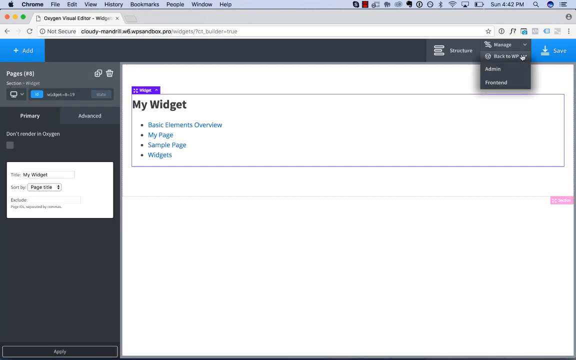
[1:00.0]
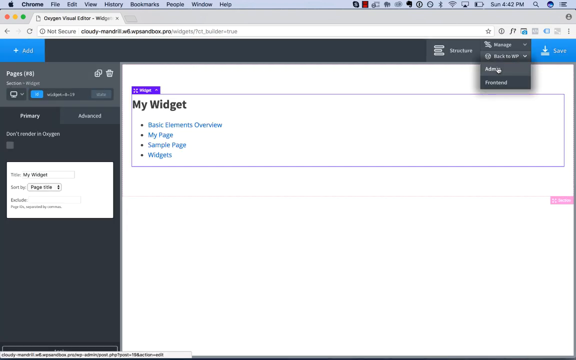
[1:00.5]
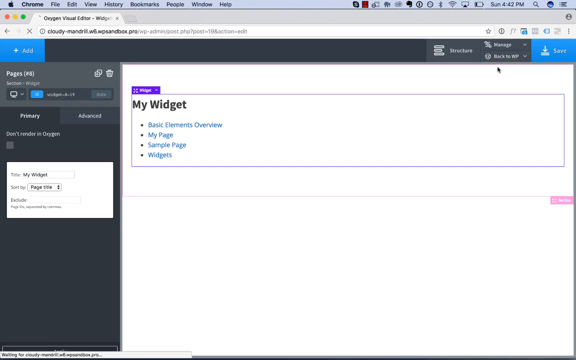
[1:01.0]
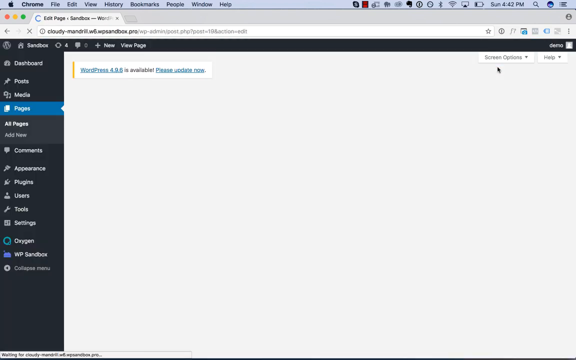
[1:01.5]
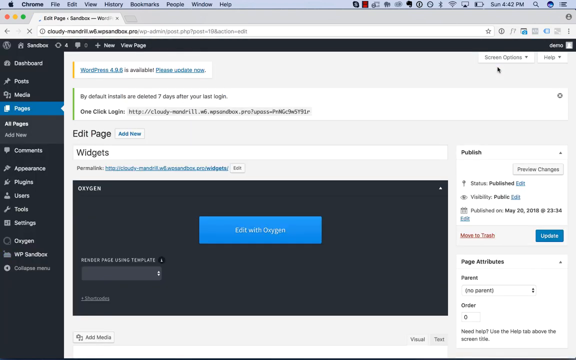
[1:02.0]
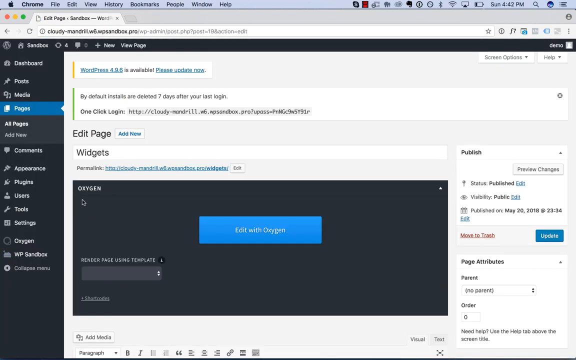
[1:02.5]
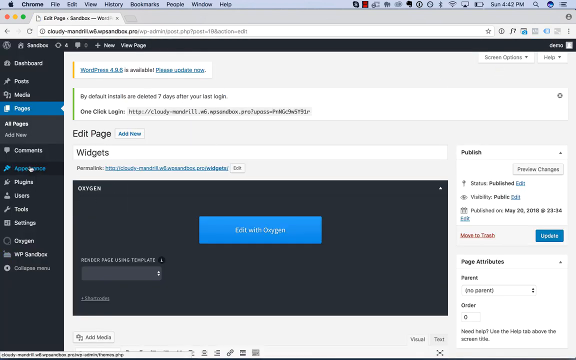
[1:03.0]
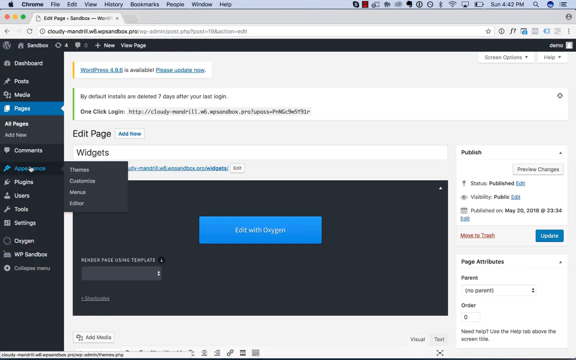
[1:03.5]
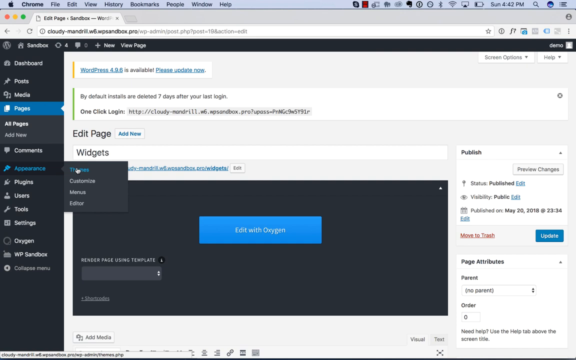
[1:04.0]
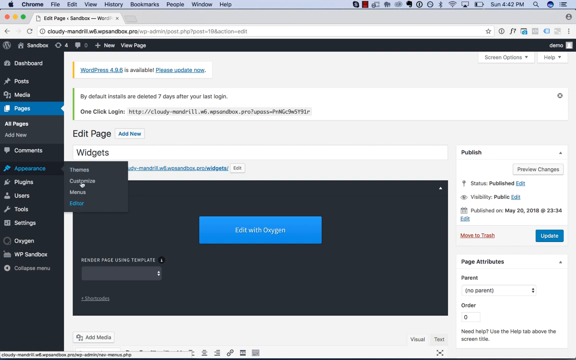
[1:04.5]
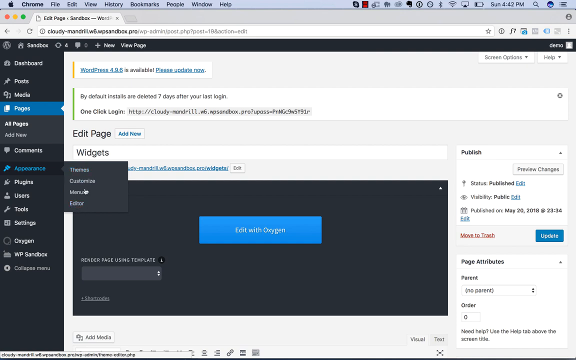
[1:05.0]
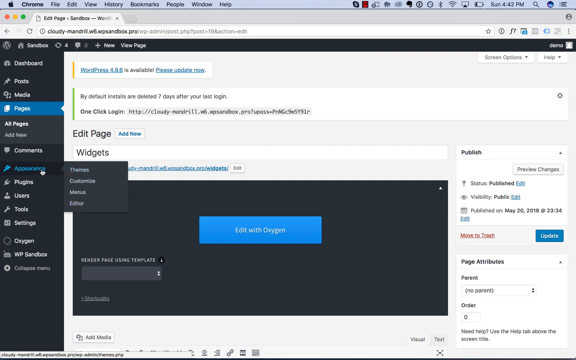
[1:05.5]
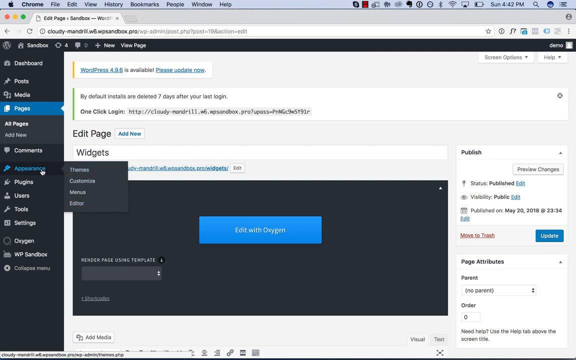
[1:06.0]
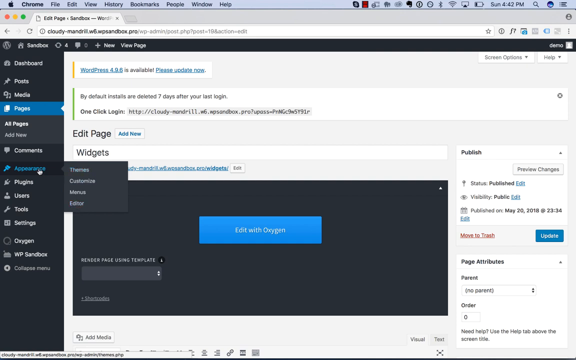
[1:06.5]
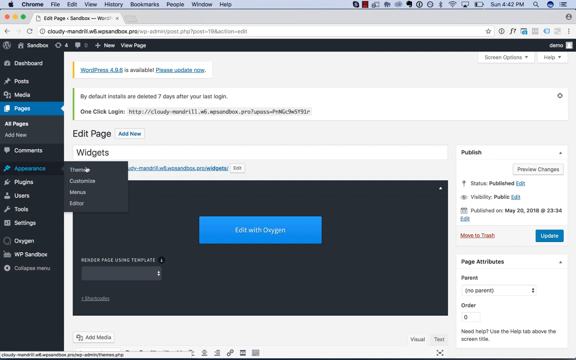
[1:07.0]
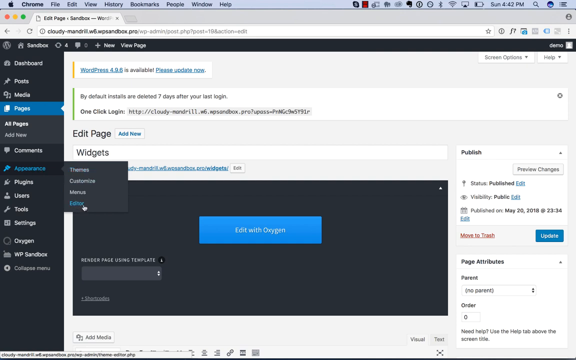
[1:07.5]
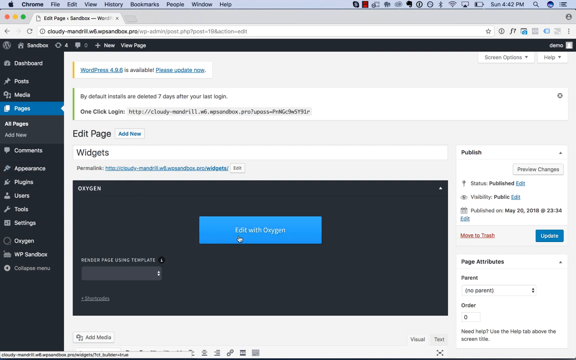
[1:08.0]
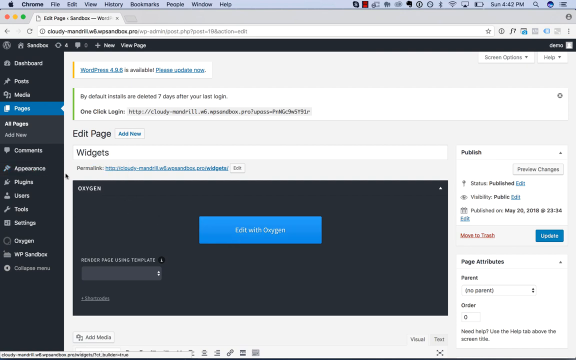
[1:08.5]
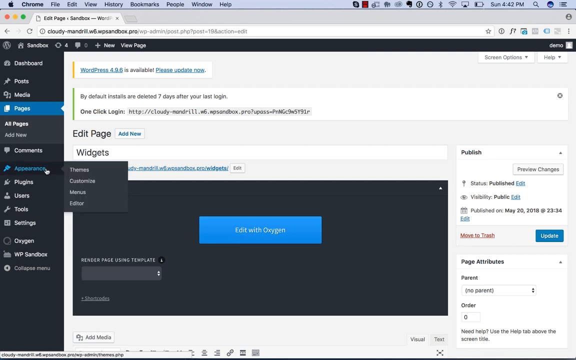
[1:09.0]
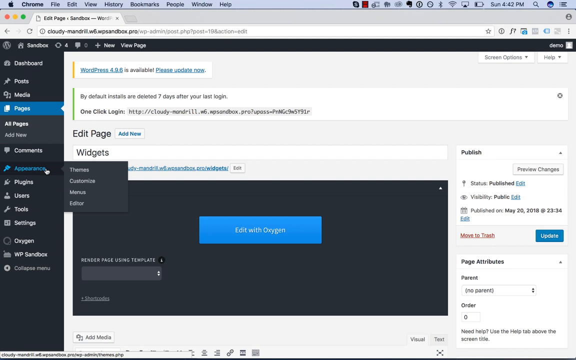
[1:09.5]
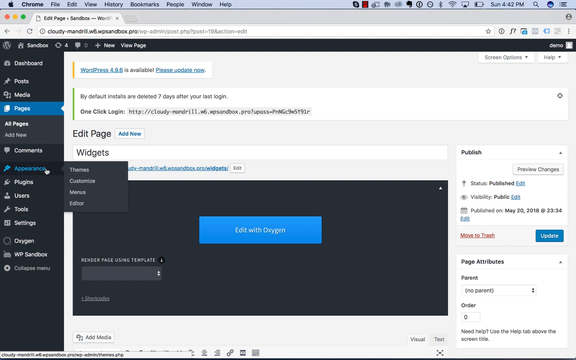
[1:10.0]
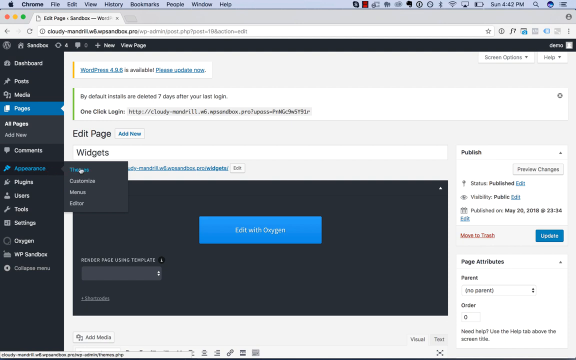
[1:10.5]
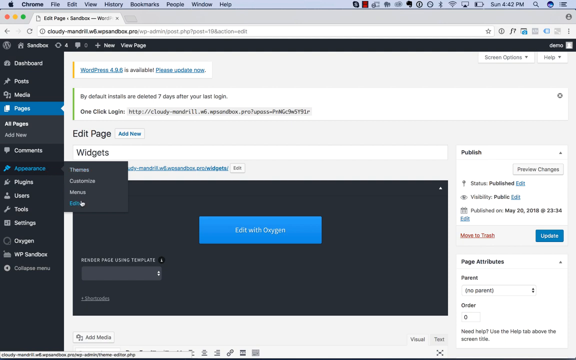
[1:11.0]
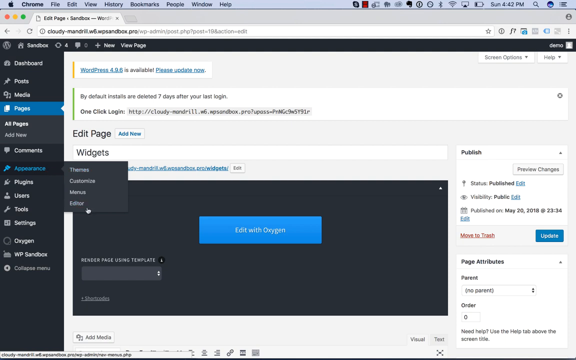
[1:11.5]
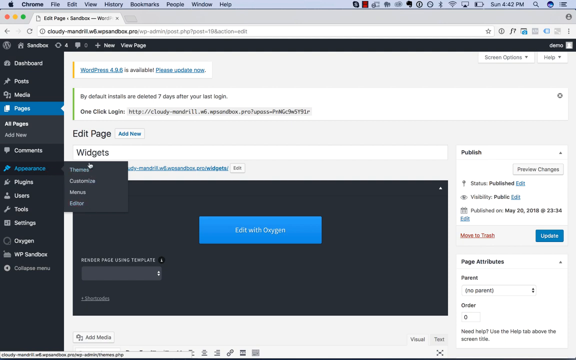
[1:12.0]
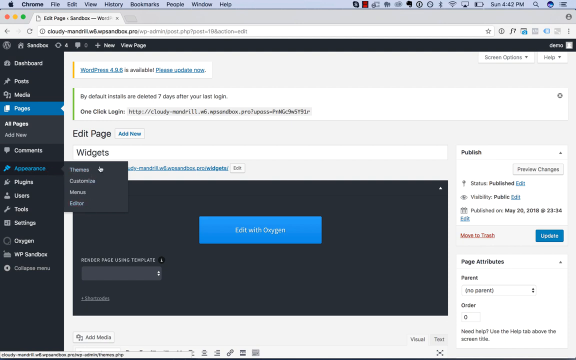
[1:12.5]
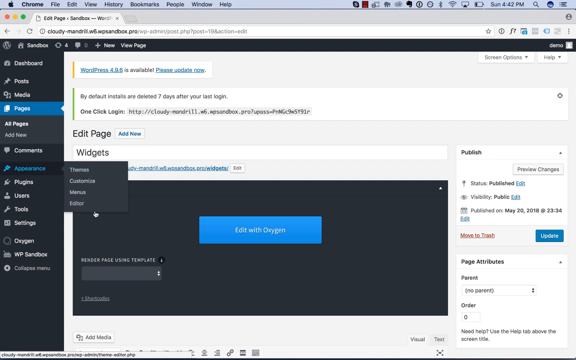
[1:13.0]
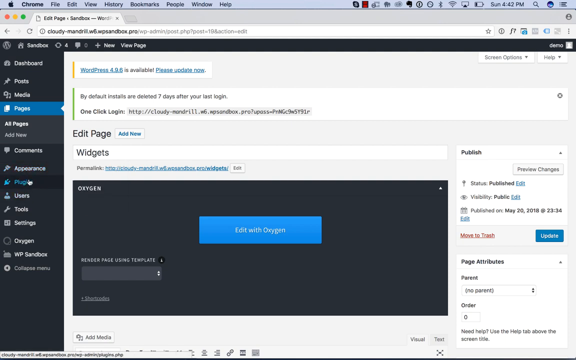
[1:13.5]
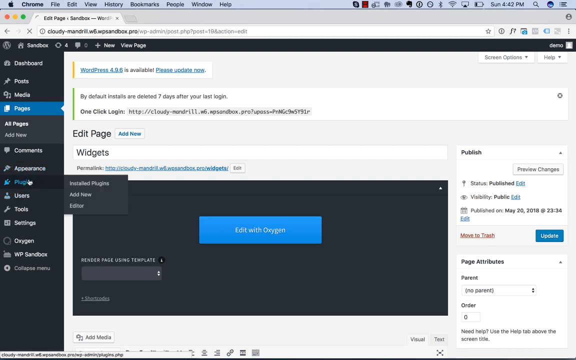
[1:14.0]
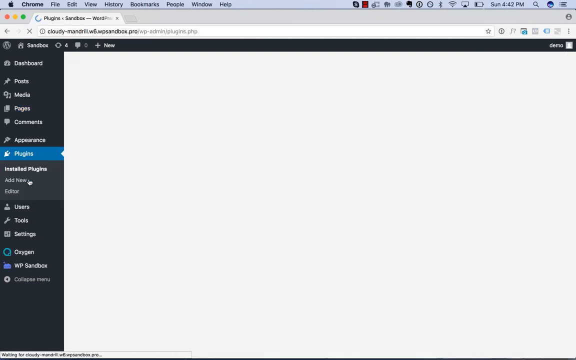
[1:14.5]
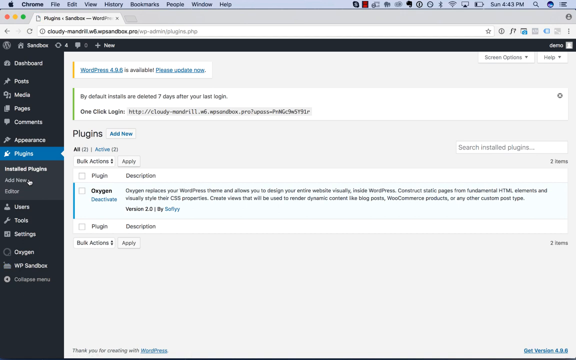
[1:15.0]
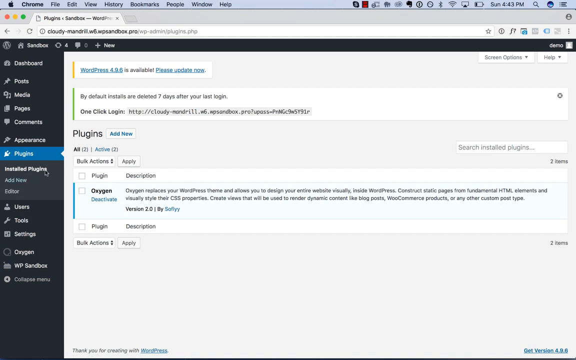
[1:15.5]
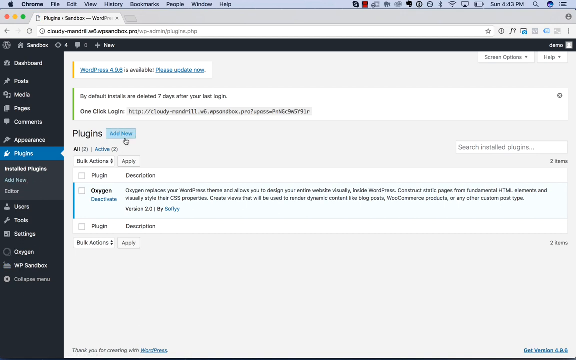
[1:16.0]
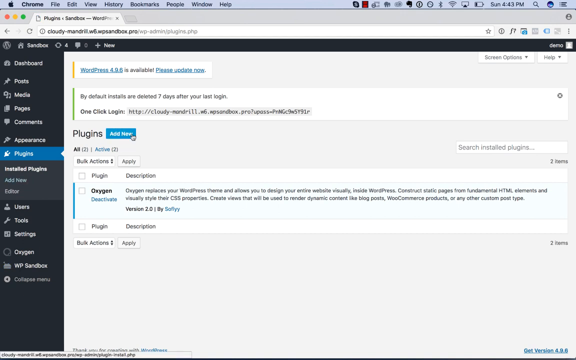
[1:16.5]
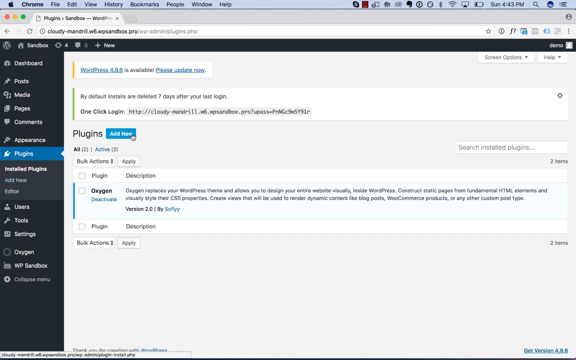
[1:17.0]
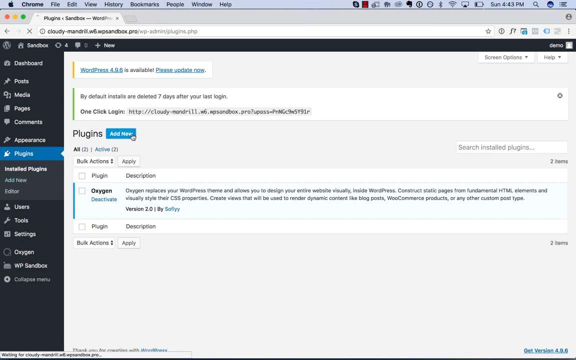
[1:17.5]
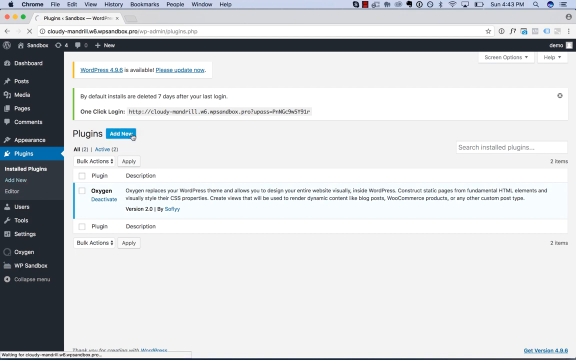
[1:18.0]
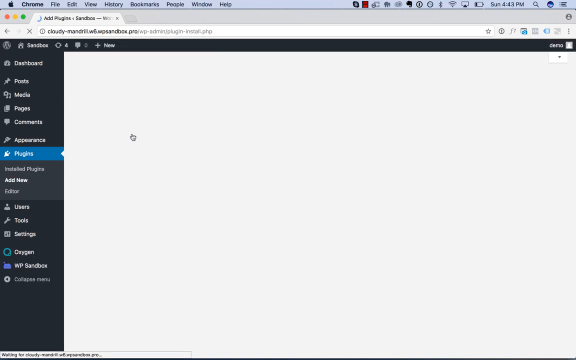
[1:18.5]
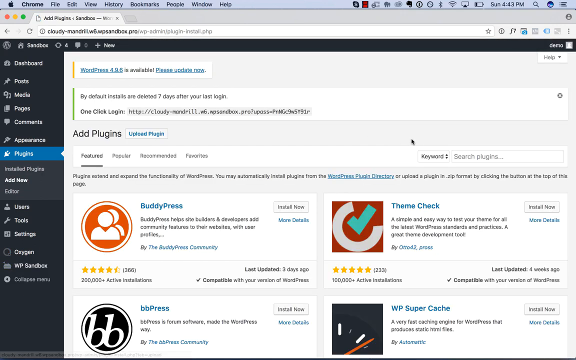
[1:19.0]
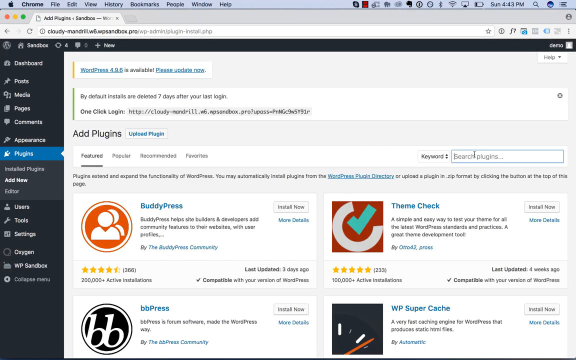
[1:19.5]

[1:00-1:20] On a Mac desktop, Chrome is open with Oxygen Visual Editor in a browser tab, and the user is working on a site whose page is still fairly blank. They go into Admin and then to Appearance on the left-hand side, moving back and forth through Appearance to show its different options. They click Plugins, go to add a new plugin to their WordPress site, and begin typing in the search bar to find the plugin they want. They are showing how to use Oxygen Visual Editor to set up a WordPress site.